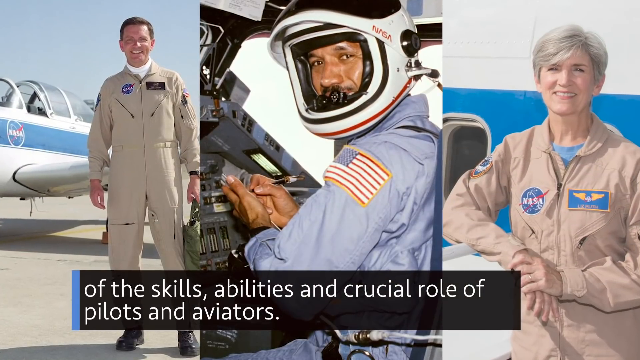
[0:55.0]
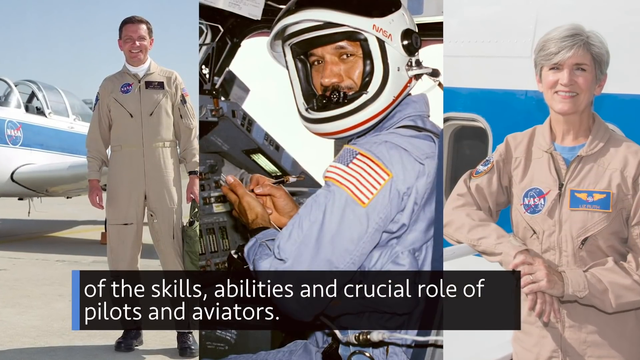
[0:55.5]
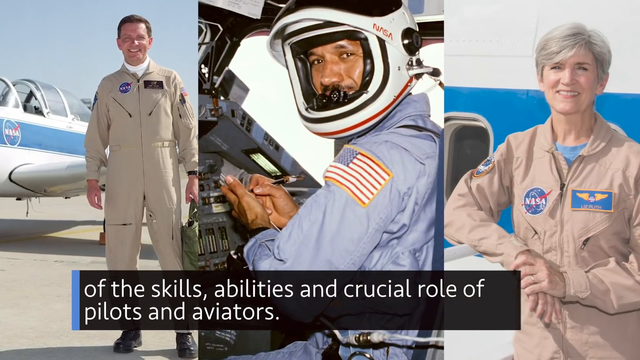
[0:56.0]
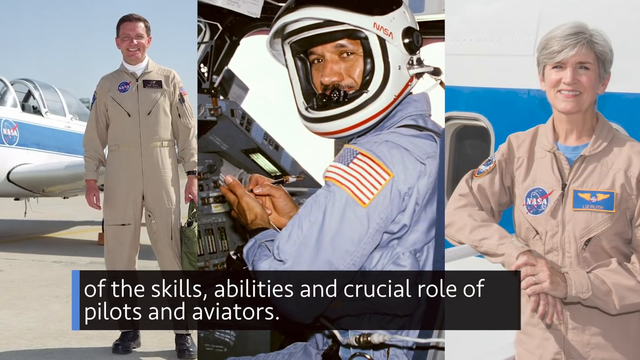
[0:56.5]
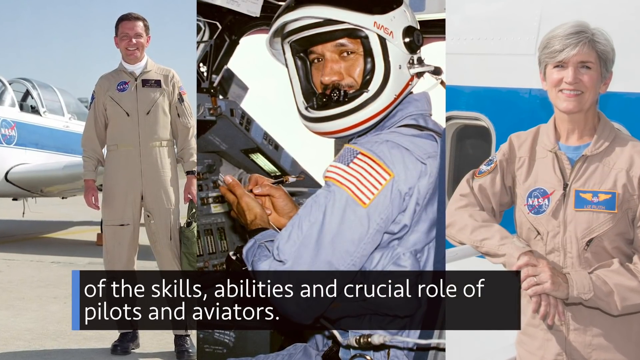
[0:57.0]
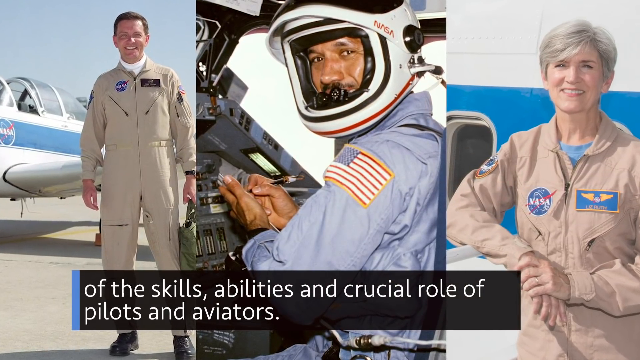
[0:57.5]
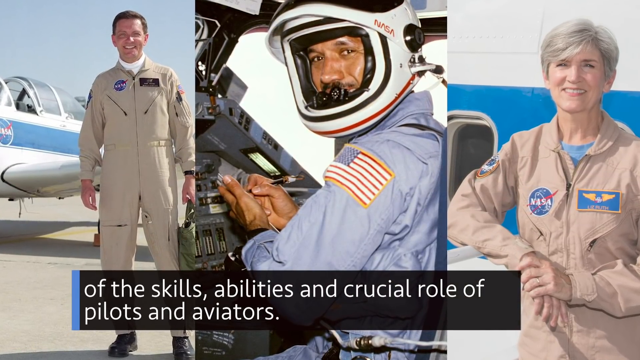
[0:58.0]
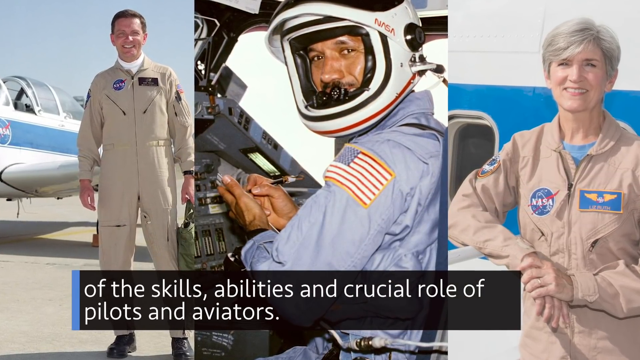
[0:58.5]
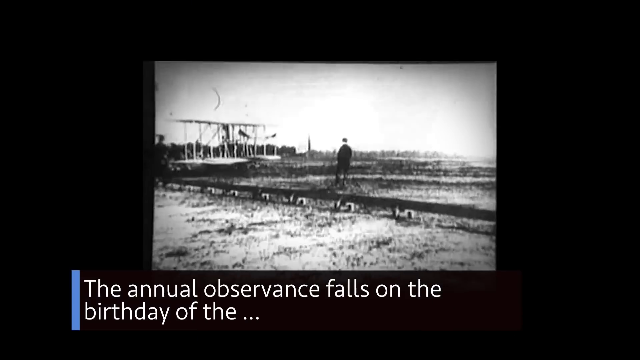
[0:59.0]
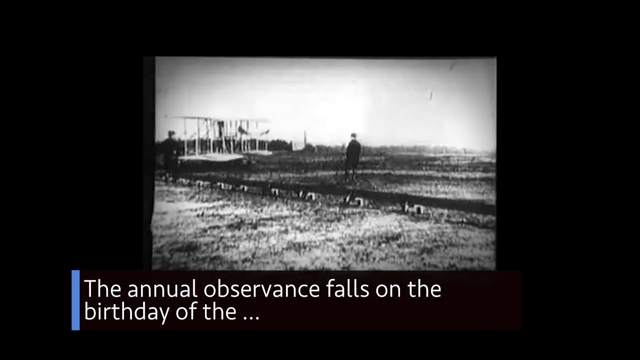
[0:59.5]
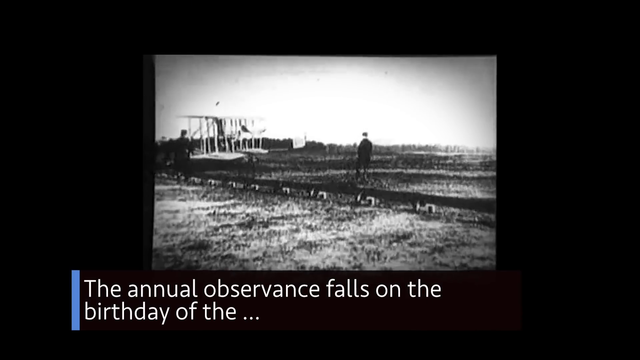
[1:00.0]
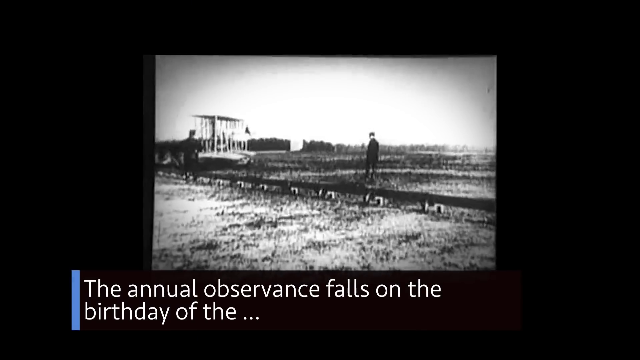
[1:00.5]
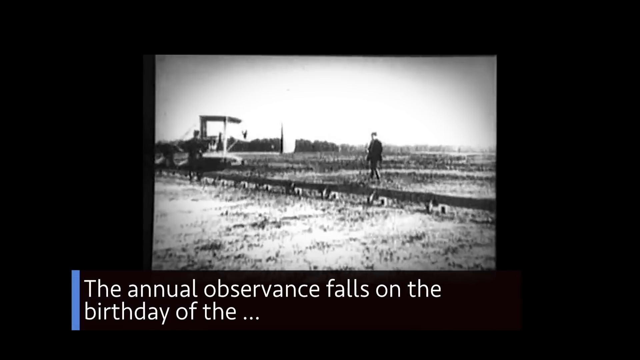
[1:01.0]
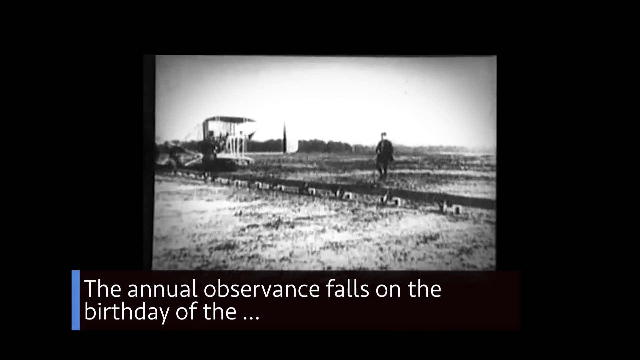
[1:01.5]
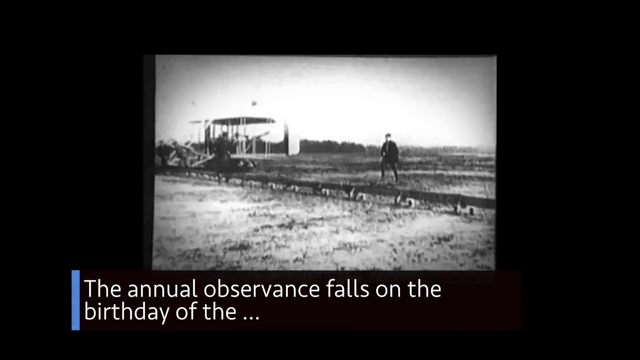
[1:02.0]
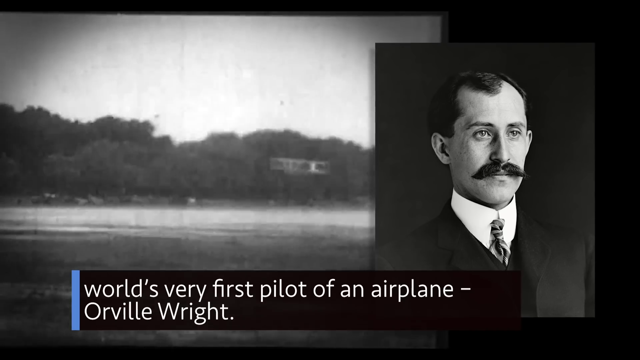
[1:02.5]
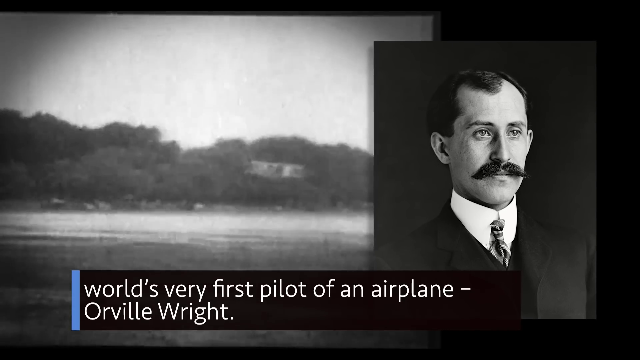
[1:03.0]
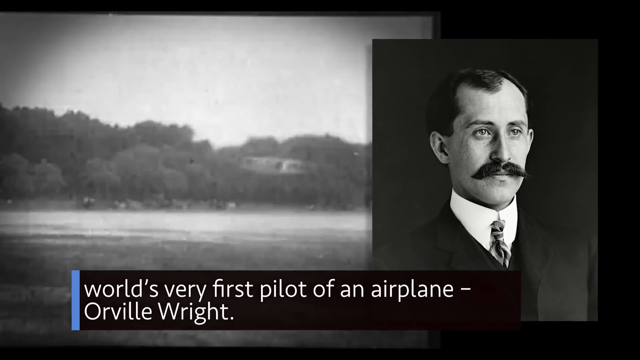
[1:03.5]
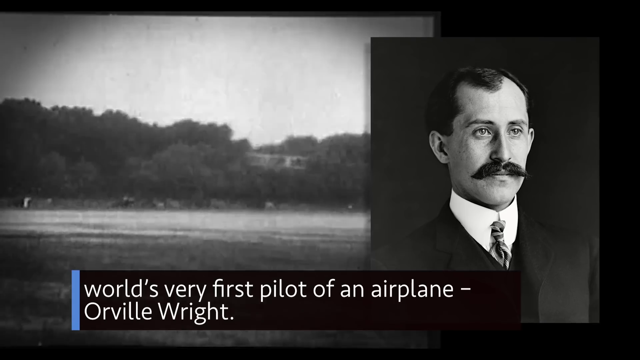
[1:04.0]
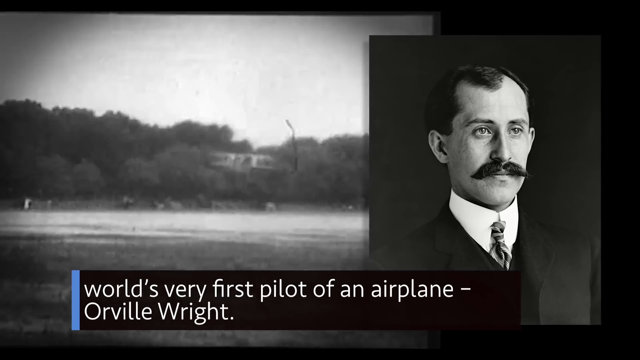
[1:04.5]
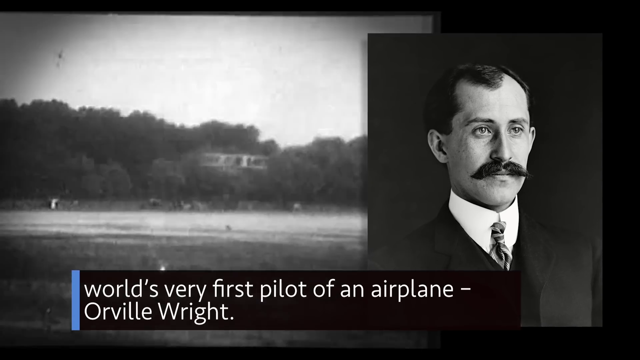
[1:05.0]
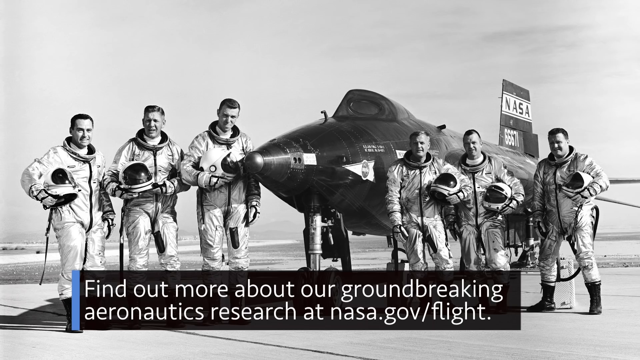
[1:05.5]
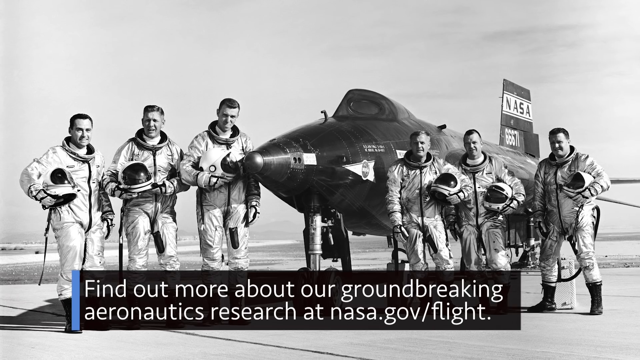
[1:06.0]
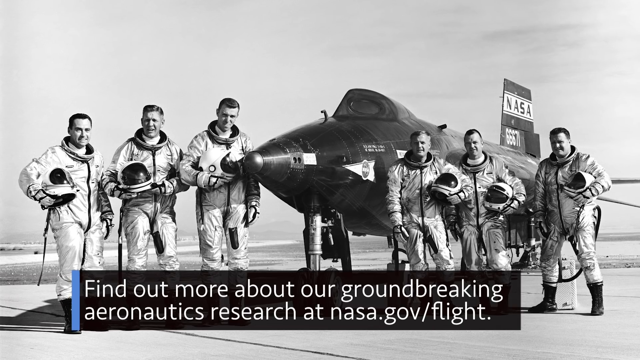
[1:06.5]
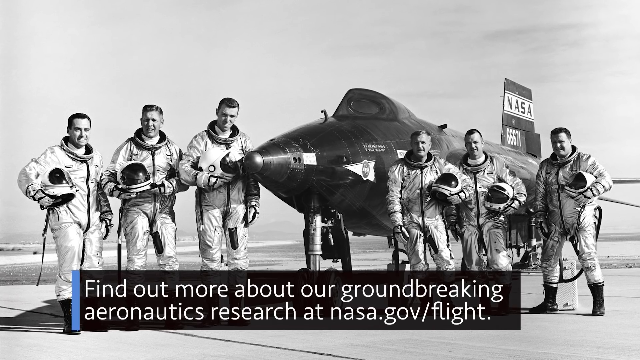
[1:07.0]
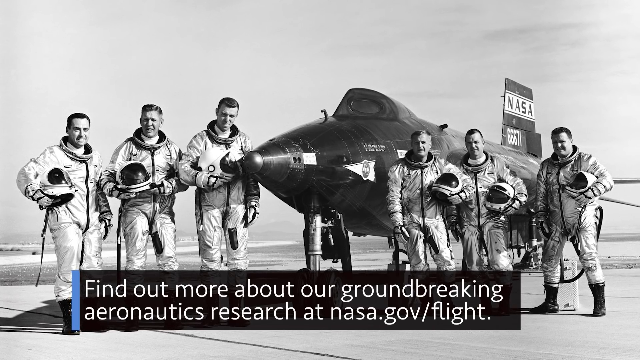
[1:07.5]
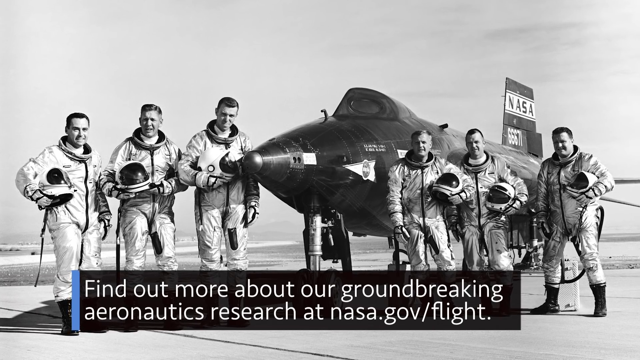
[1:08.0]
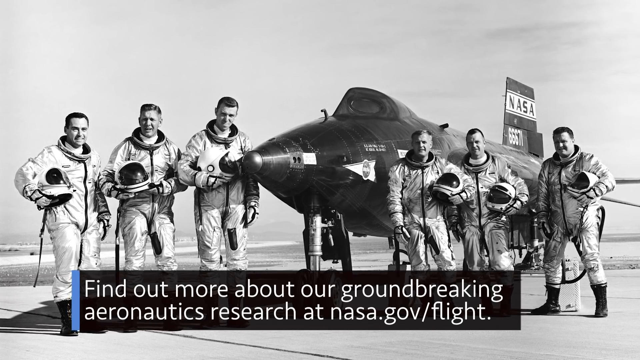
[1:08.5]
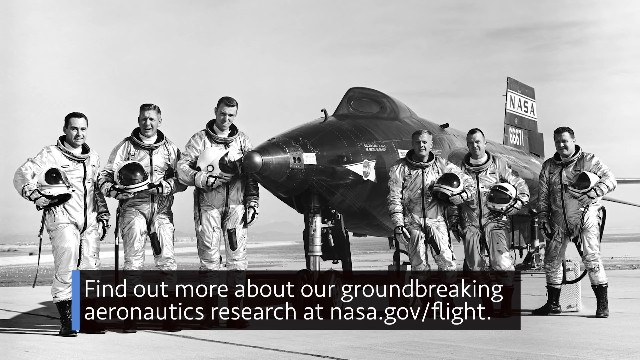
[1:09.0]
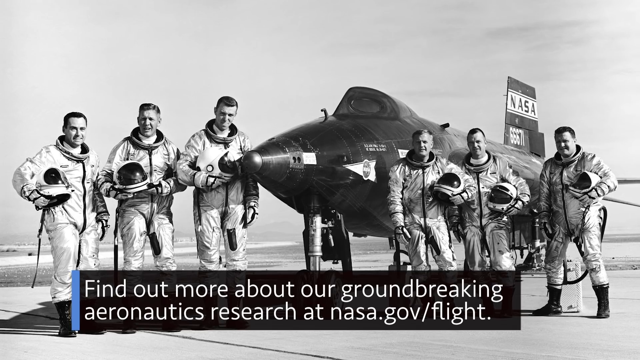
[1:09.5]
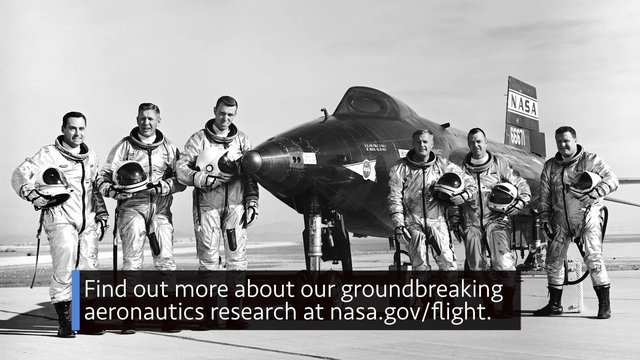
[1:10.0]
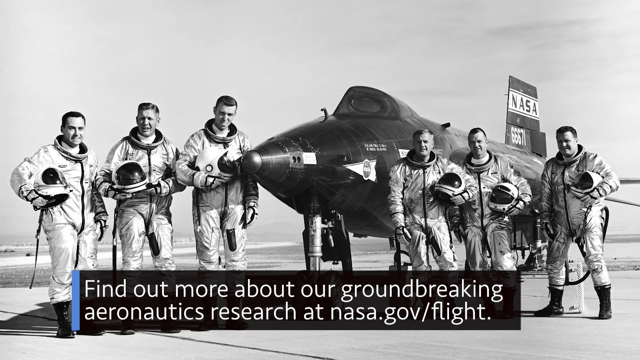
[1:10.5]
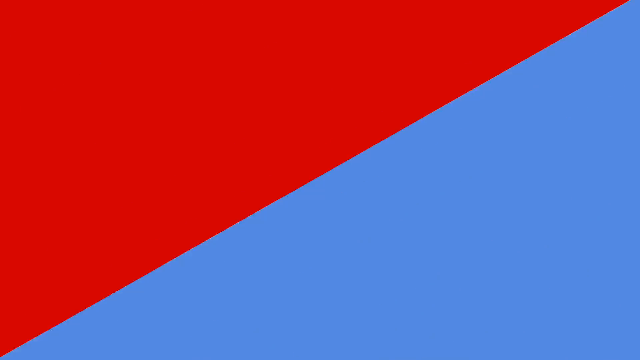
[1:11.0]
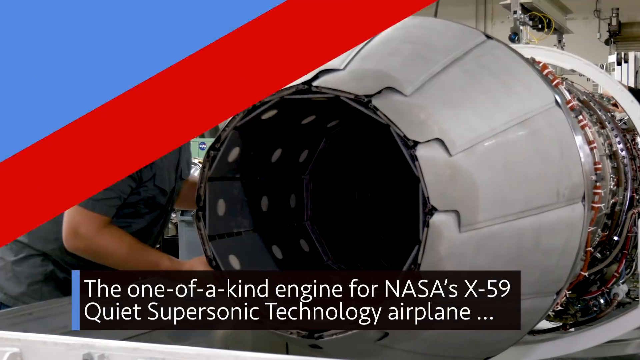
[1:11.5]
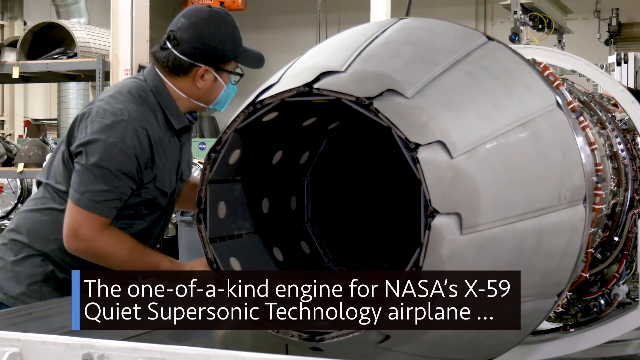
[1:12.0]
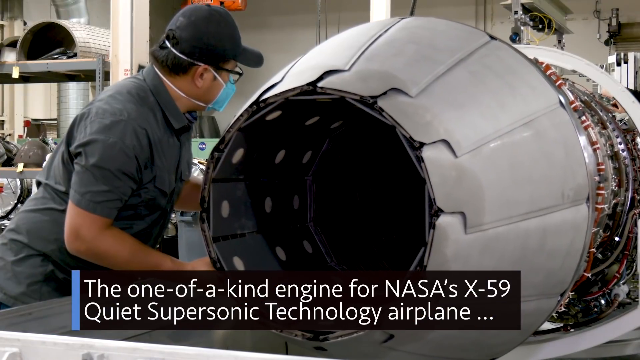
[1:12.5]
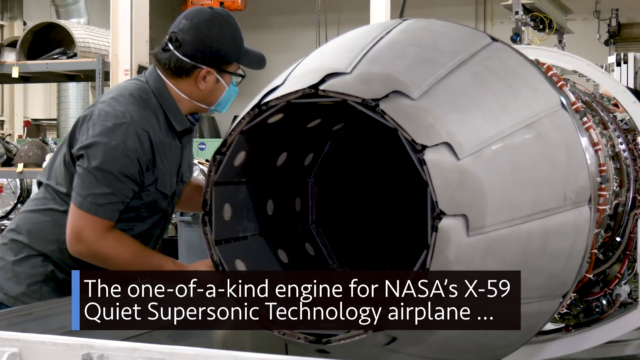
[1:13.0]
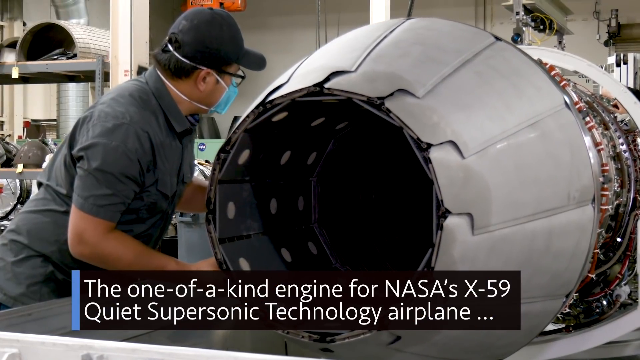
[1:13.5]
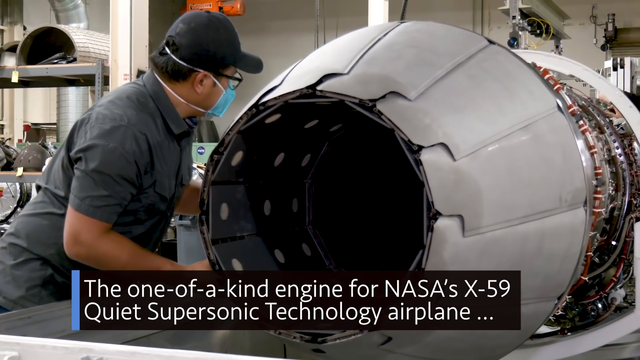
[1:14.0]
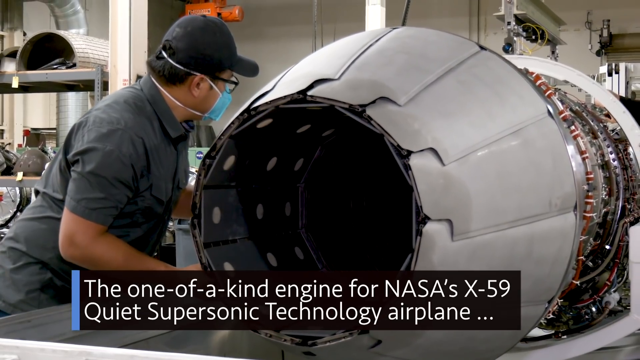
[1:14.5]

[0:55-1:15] Three astronauts are shown: a middle-aged white man, an African-American man in the center who looks to be in his early 40s, and a white woman with white hair, maybe about 50 years old. The banner at the bottom reads "Of the skills, abilities, and crucial role of pilots and aviators." The scene changes to a black and white, old-timey sort of video of a first-generation plane launching, with the text "The annual observance falls on the birthday of the world's very first pilot of an airplane, Orville Wright." A headshot of Orville follows, along with a clip of his plane flying. Next, six pilots stand in front of a black NASA plane, with text at the bottom reading "Find out more about our groundbreaking aeronautics research at nasa.gov/flight." A red and blue transition crosses the screen before a scene of what looks to be an engineer putting a part of the ship together, with the text "The one-of-a-kind engine for NASA's X-59 quiet supersonic technology airplane."